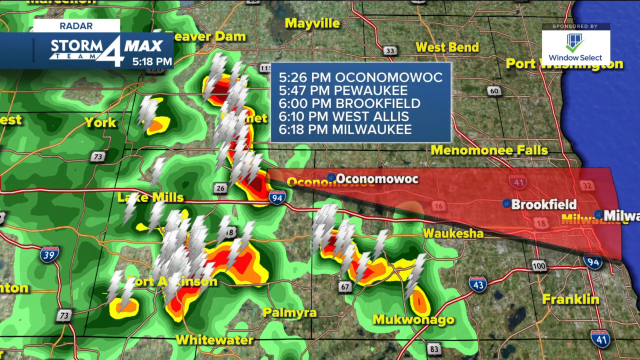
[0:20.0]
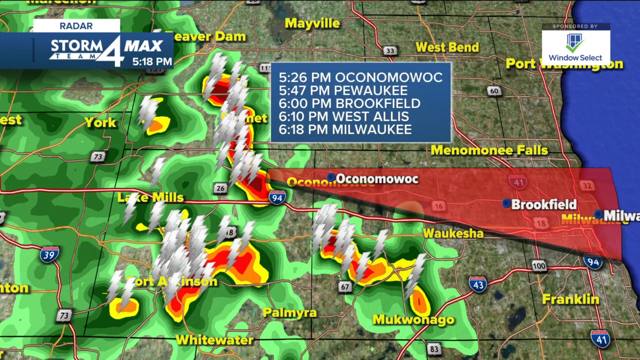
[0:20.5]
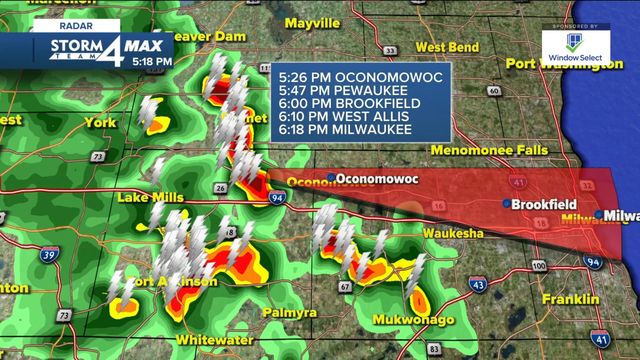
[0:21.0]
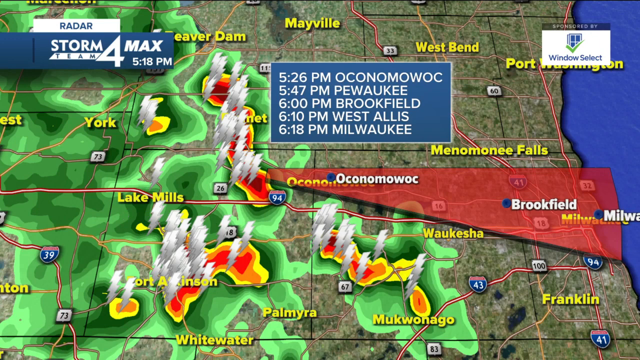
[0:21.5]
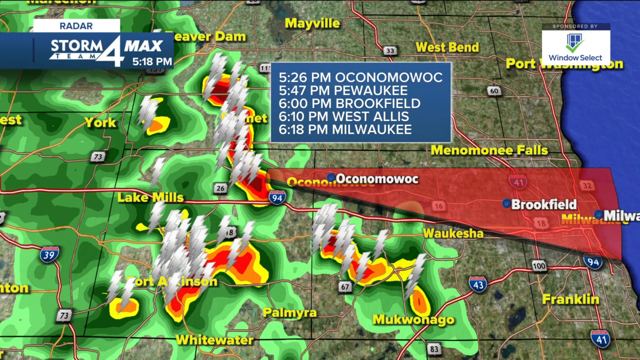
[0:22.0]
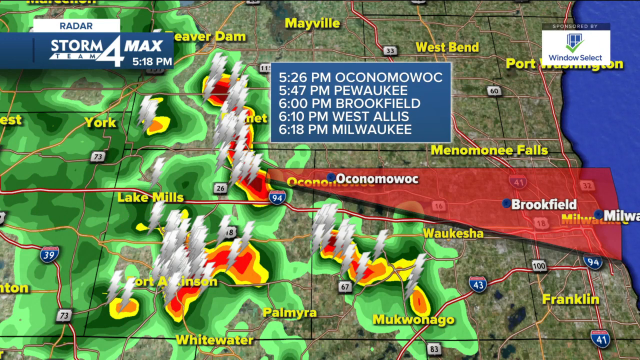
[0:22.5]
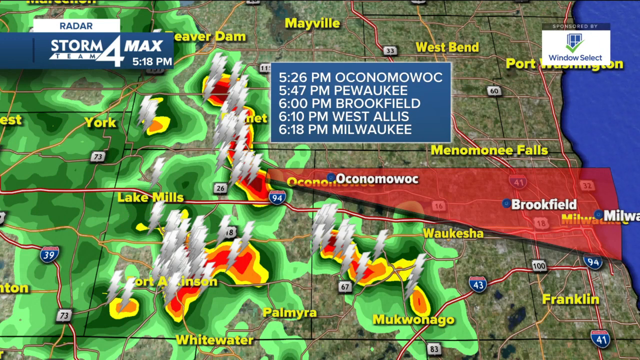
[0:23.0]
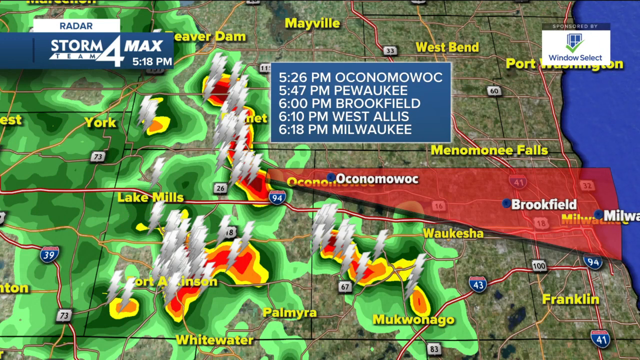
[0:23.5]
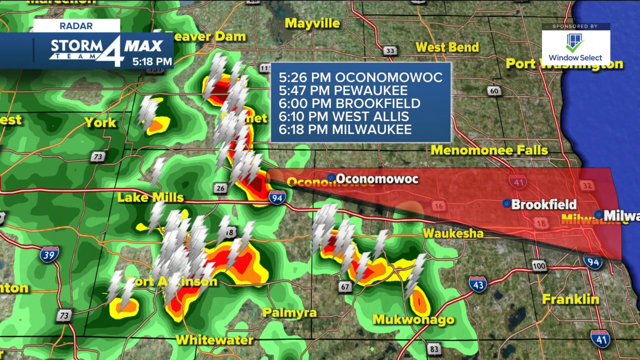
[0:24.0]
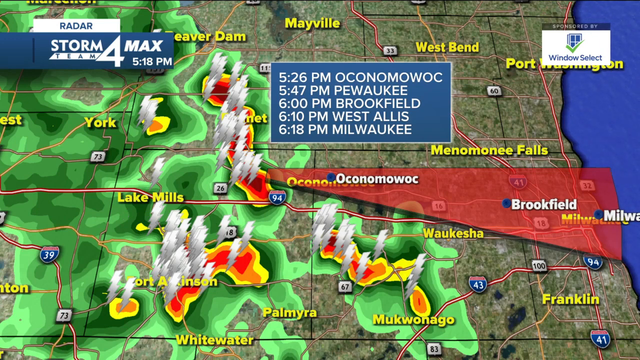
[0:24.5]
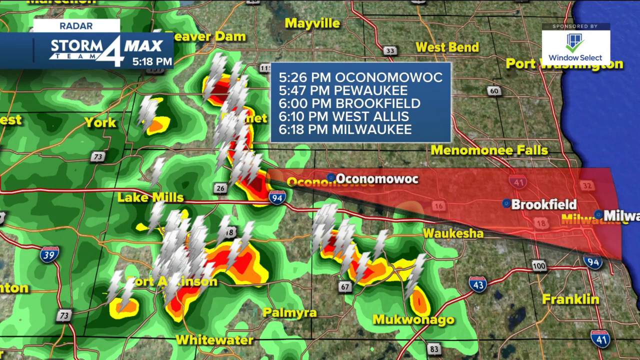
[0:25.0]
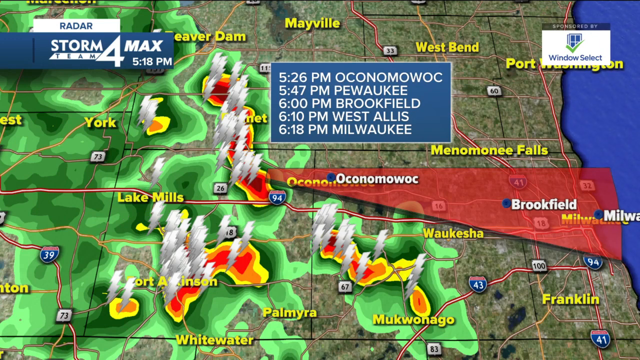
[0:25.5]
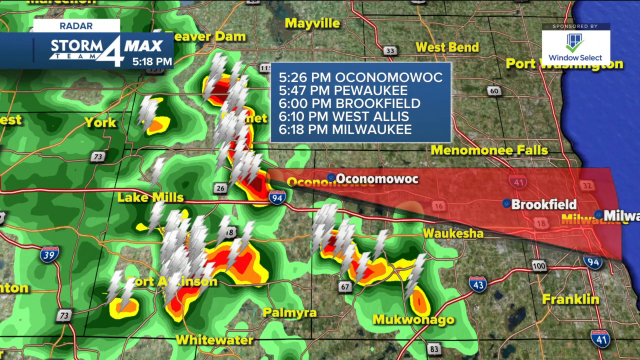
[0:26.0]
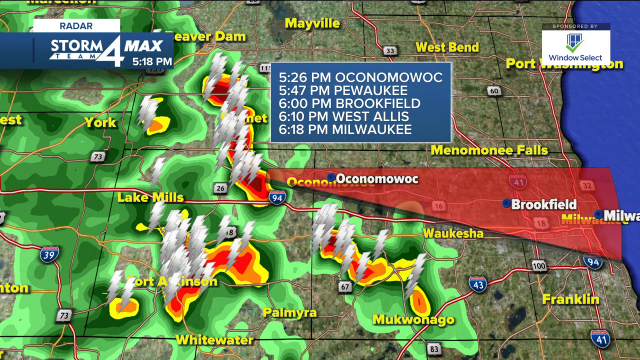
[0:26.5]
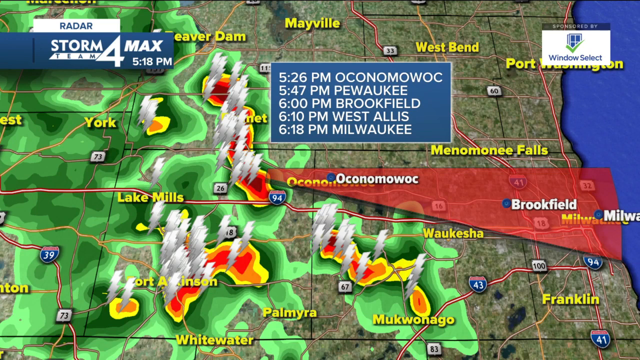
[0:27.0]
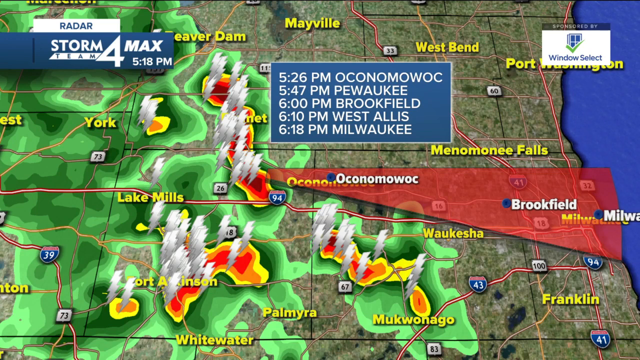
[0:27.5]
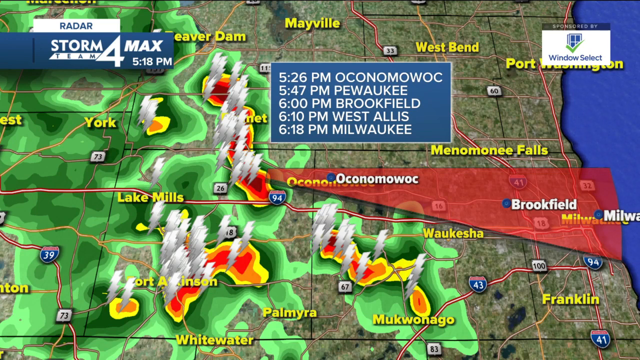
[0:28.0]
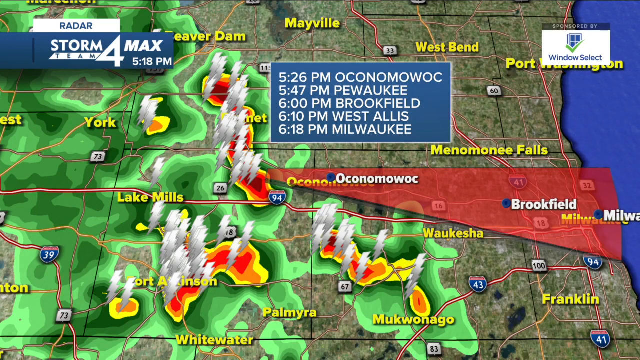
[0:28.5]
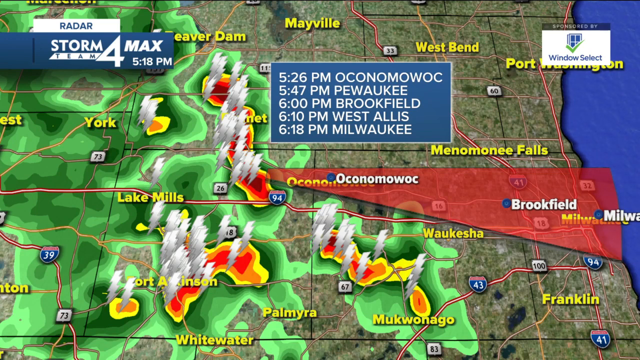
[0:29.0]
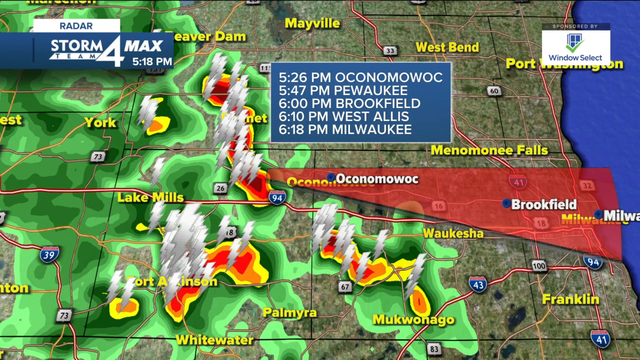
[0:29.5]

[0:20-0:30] An area is covered by green particles that seem to be an oil painting, with light green and dark green. In the middle of the image, covering several labeled areas, are patches of yellow, orange and red that seem to show fiery engulfs coming out with white, and these areas seem to be continuously lit up. A red coloring runs from Okno Mowak out to Brookfield, widening at the end into a triangle shape that extends to the right side where there is water. A written poster of digits is on the left-hand side, with PM times shown in the middle, and it lists different areas, seemingly five in total.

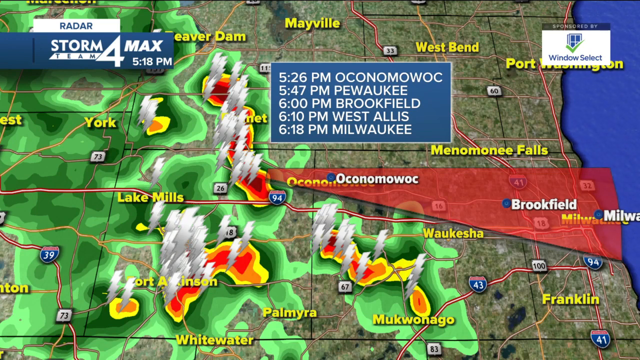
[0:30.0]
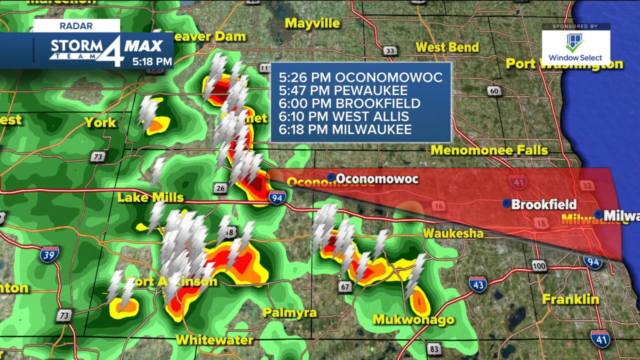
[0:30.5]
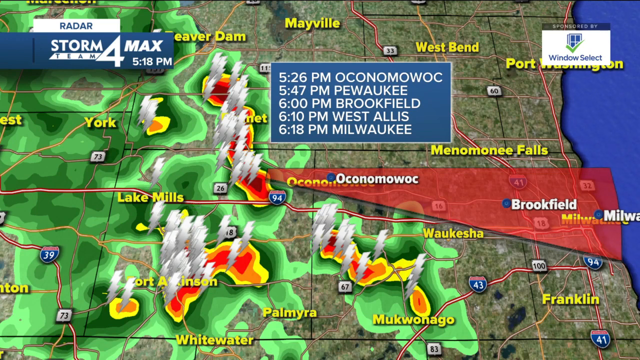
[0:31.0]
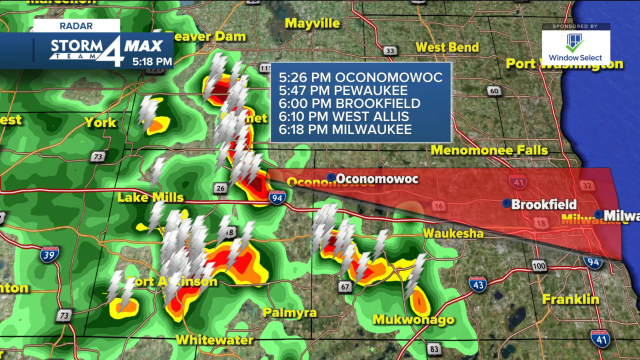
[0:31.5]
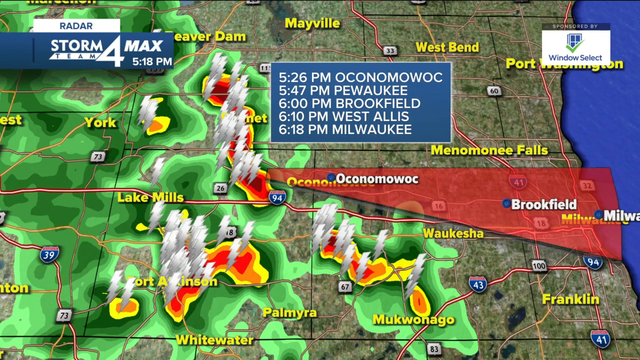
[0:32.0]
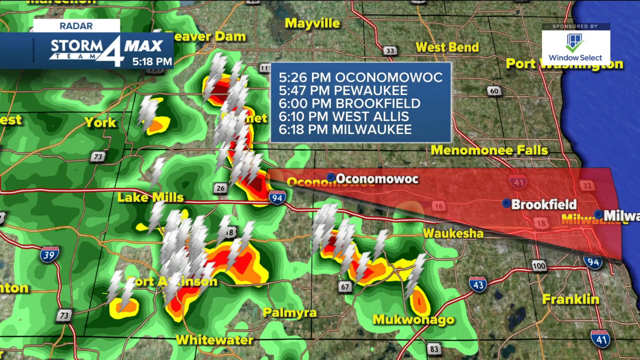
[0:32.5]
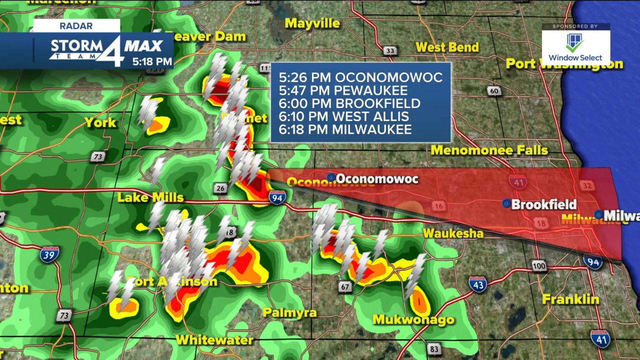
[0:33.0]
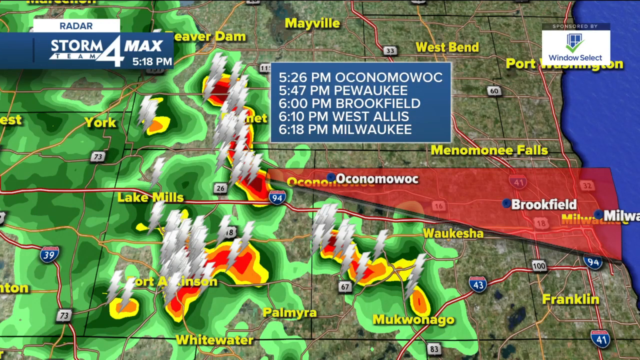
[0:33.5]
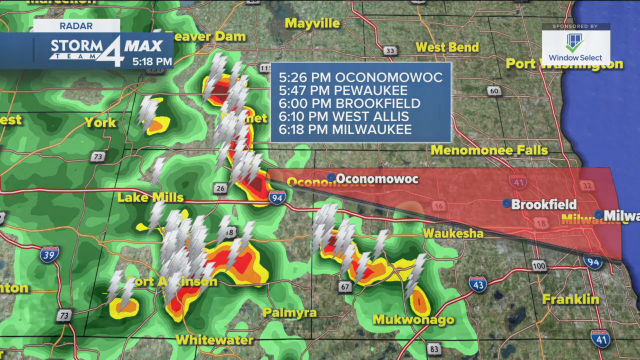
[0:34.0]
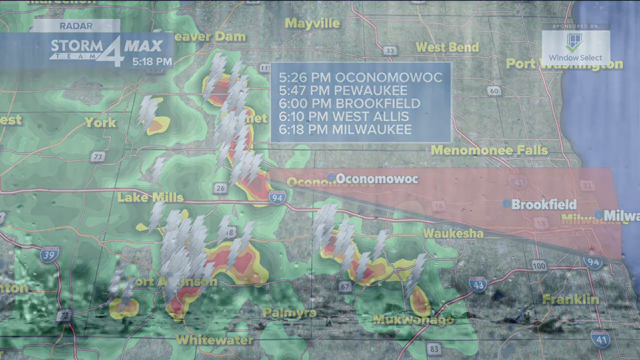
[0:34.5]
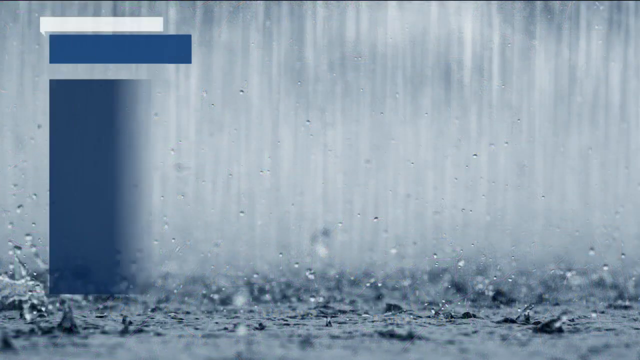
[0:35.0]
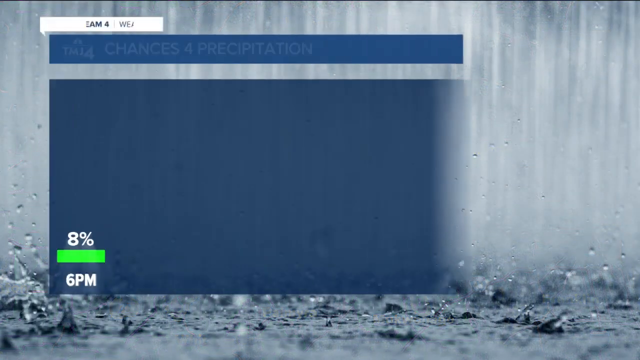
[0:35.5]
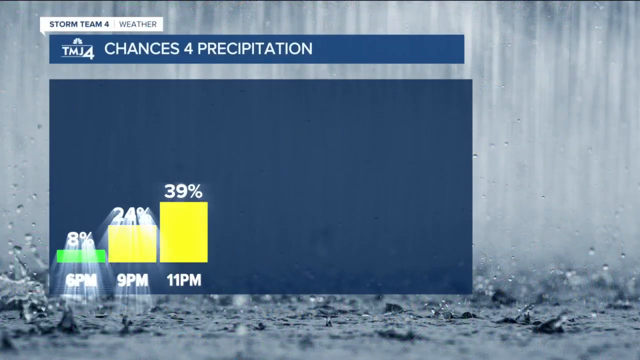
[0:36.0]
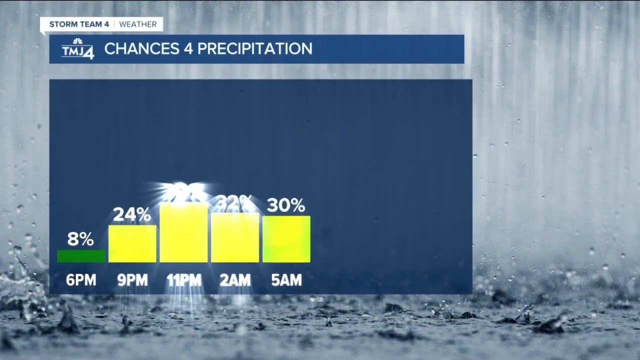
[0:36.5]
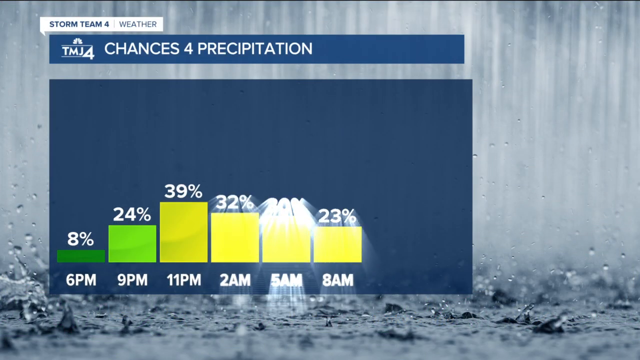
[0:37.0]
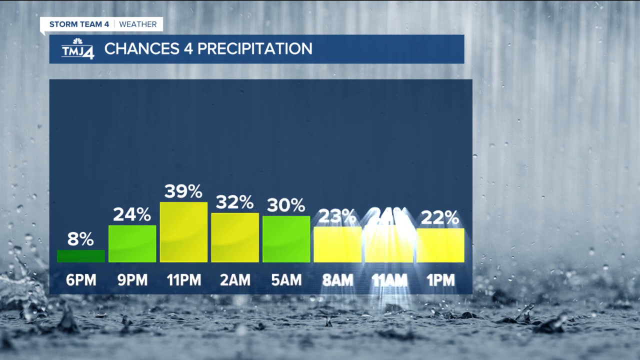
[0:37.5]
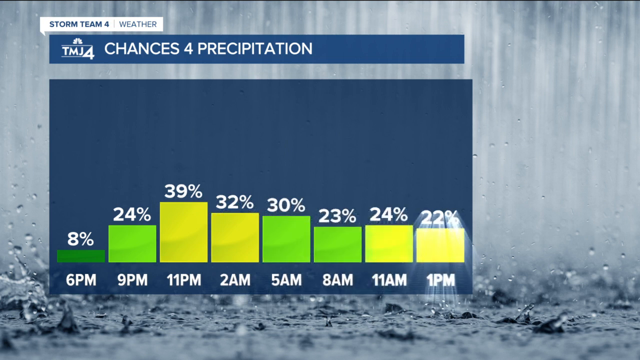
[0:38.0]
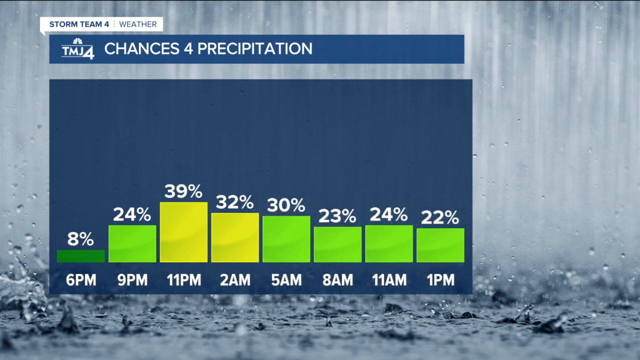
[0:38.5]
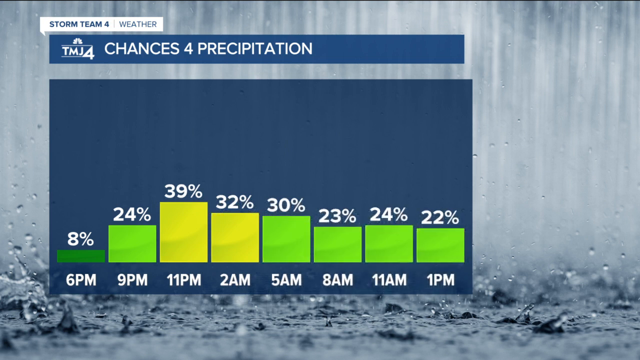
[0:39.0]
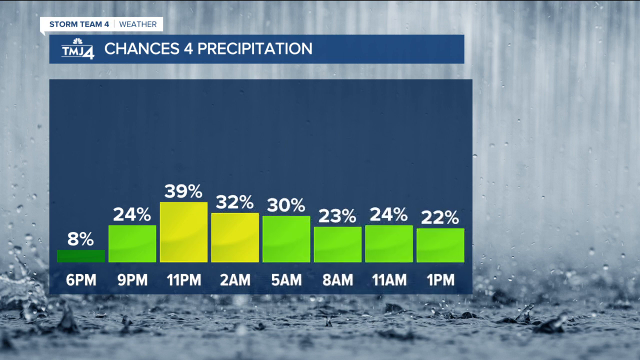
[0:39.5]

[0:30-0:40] At the edge of the image, where the red coloring in a seeming triangle form runs from Okno Mowok out to Brooklyn, a blue poster written in white sits on top of it. It reads "5.26pm Okno Mowok", "5.47pm Piwauke", "6pm Brookfield", "6.10pm West Alice" and "6.18pm Melkwauke". The page then changes to what seems to be a bar chart, with "chances for precipitation" written at the top. Behind it there seems to be a blurry image of rainfall, with splashes of water underneath. Different time frames are shown with different percentages and colors, including dark green, yellow and light green, with percentages ranging from 8% to a high of 39%, and times from 6 p.m. through 1 p.m.